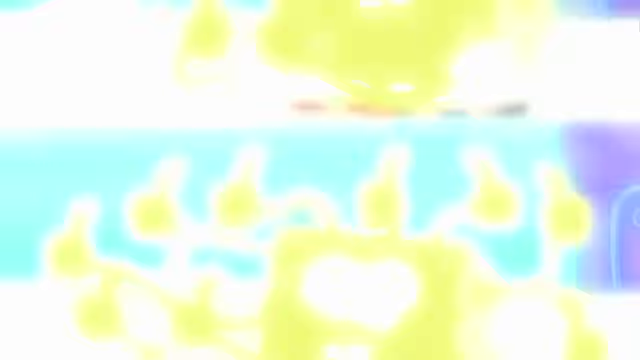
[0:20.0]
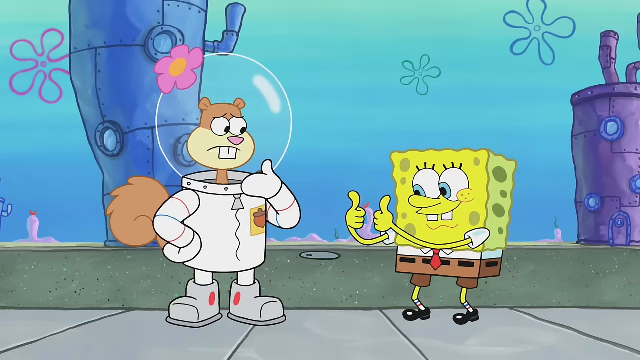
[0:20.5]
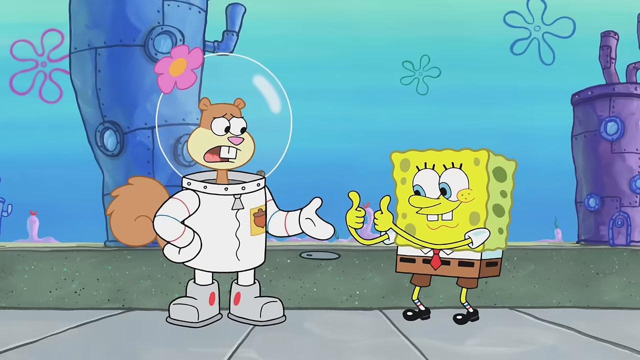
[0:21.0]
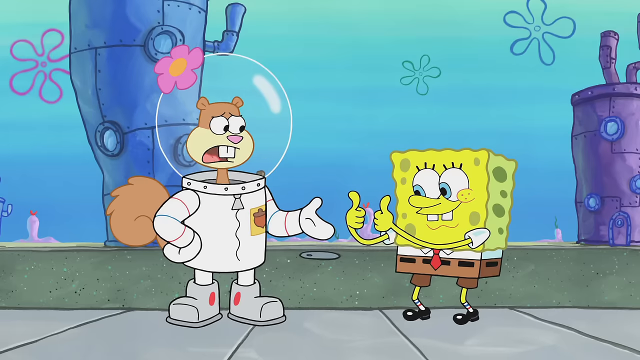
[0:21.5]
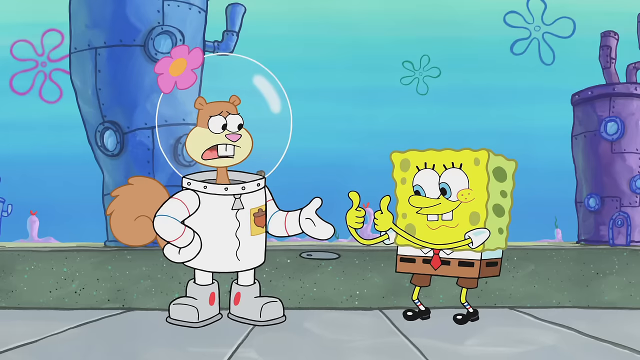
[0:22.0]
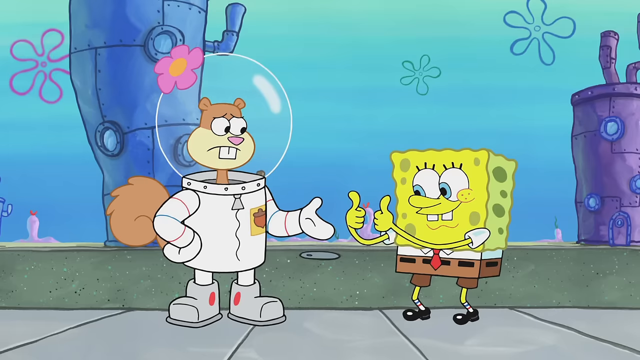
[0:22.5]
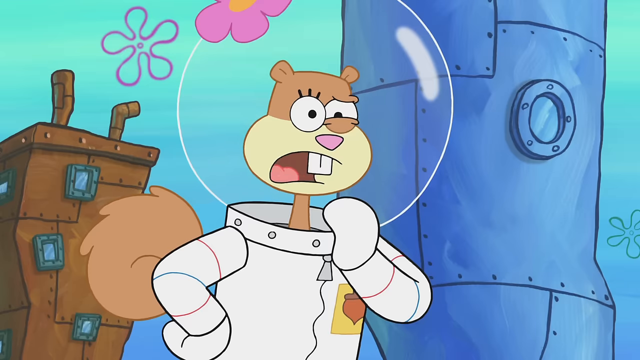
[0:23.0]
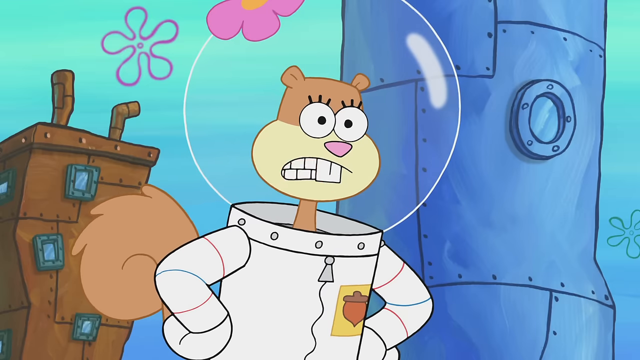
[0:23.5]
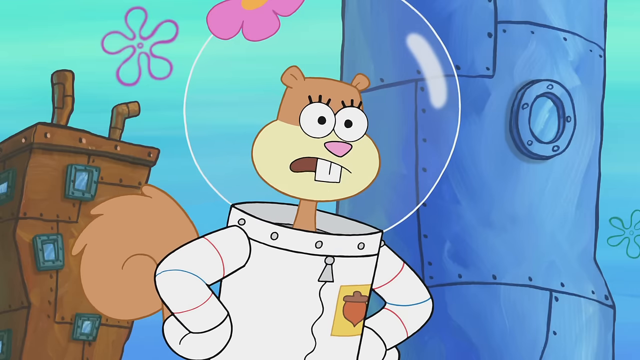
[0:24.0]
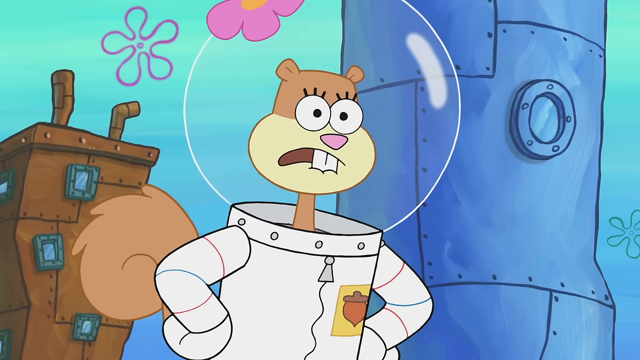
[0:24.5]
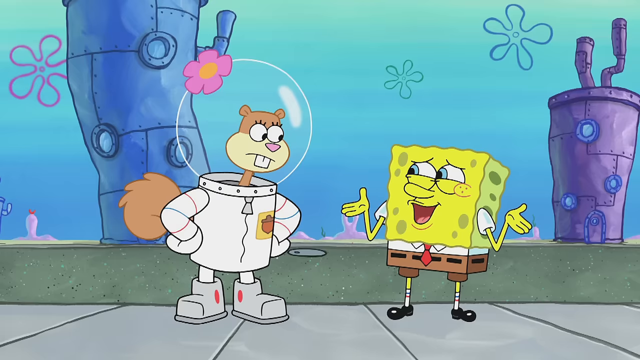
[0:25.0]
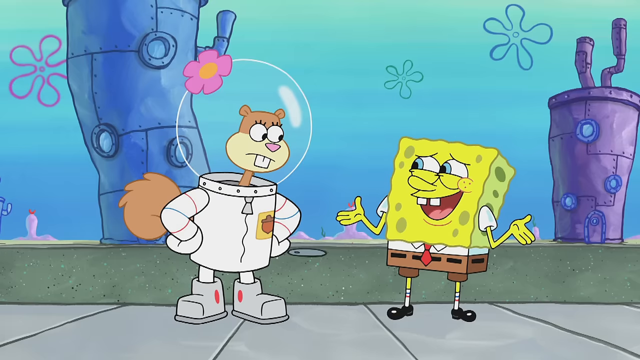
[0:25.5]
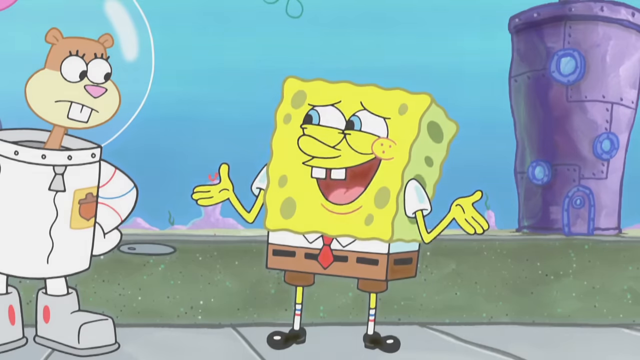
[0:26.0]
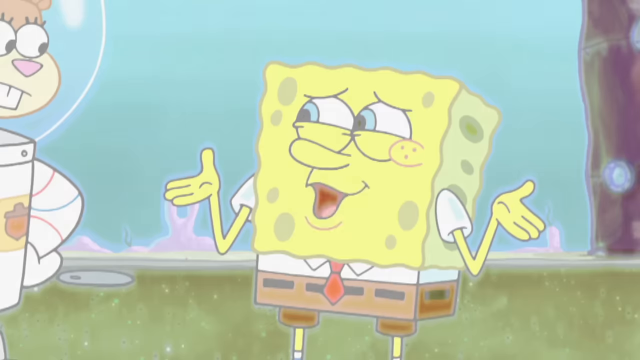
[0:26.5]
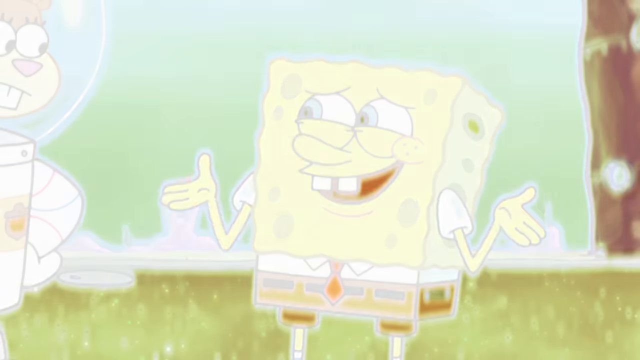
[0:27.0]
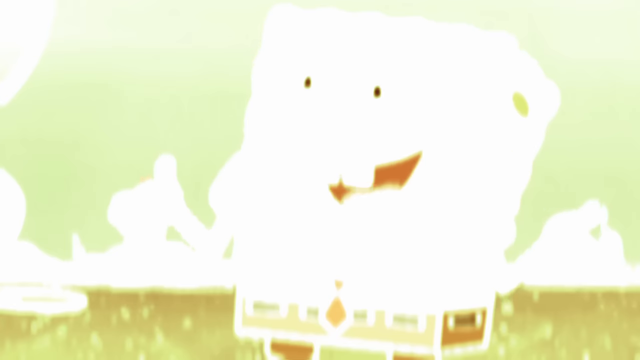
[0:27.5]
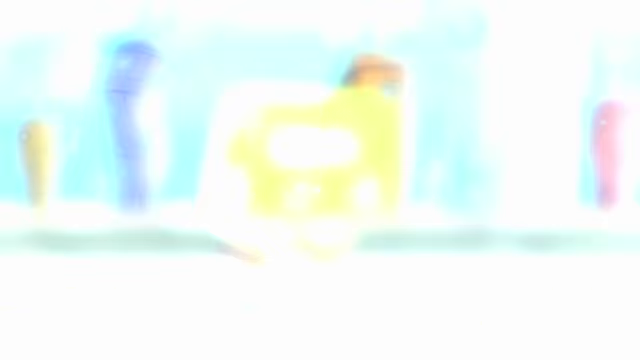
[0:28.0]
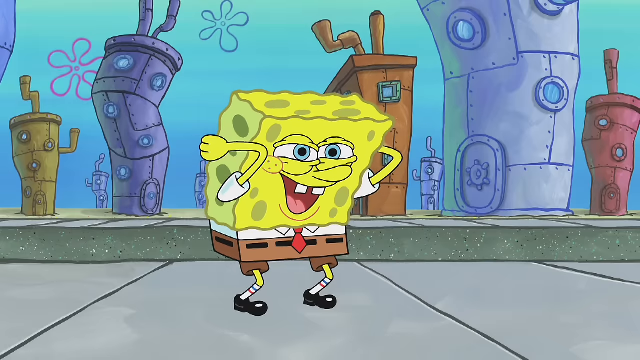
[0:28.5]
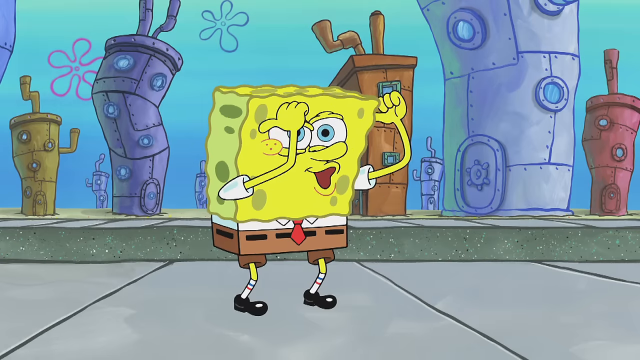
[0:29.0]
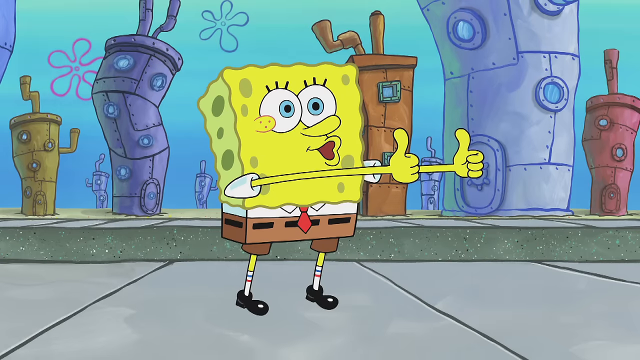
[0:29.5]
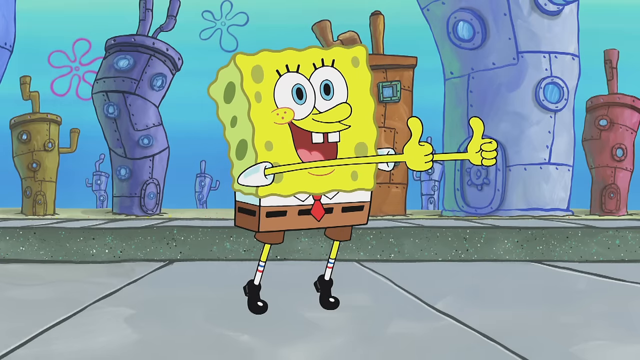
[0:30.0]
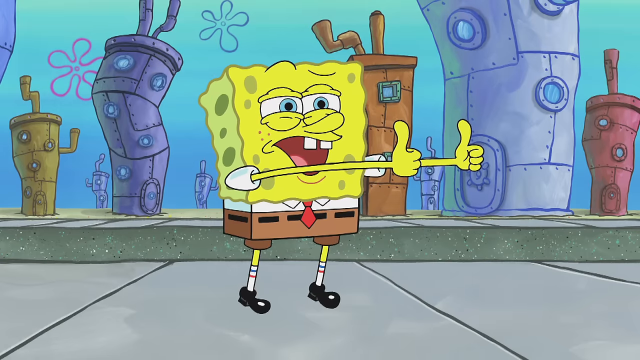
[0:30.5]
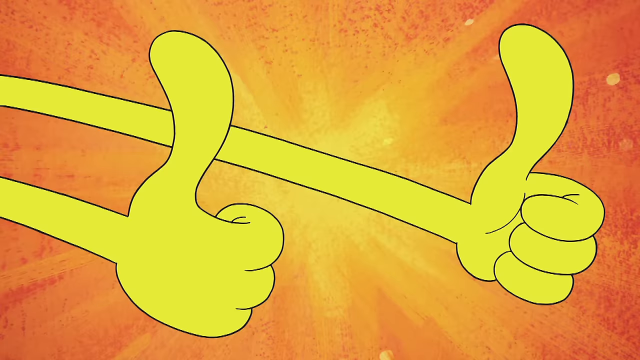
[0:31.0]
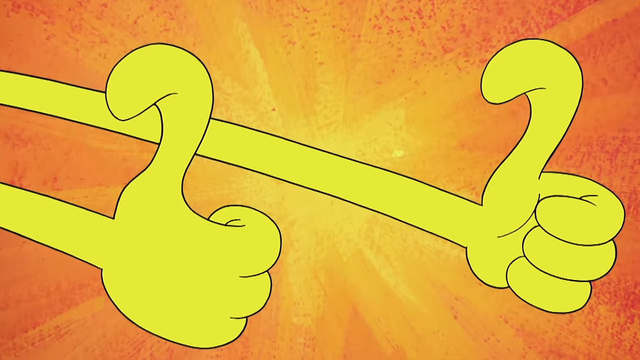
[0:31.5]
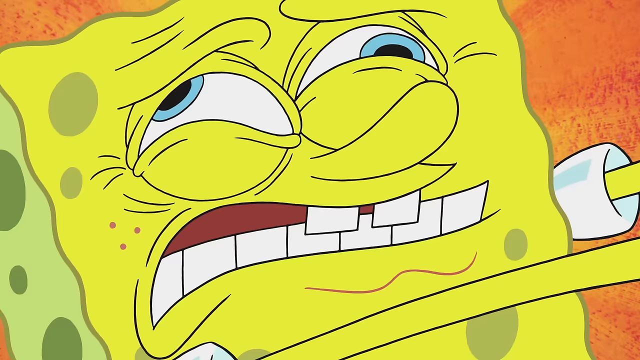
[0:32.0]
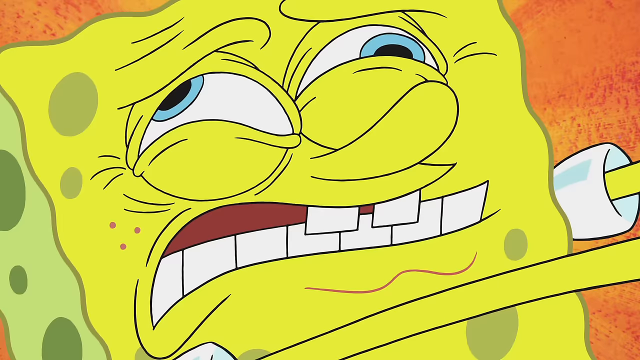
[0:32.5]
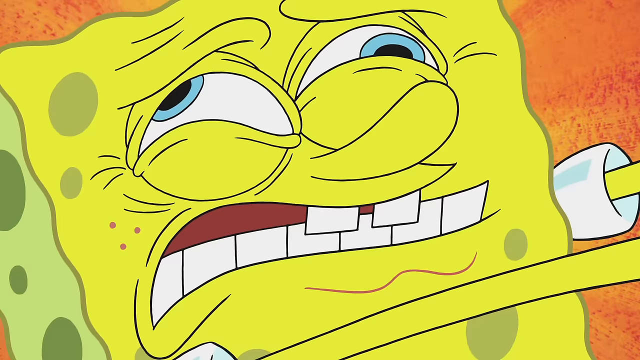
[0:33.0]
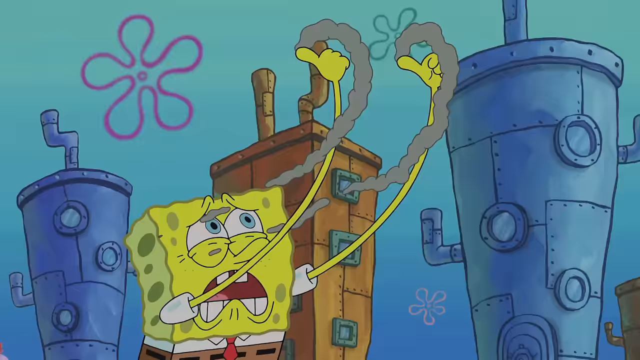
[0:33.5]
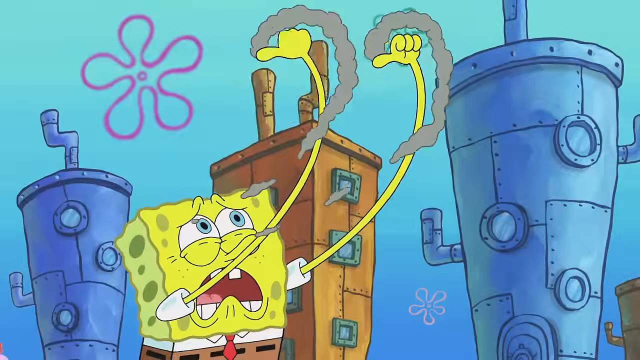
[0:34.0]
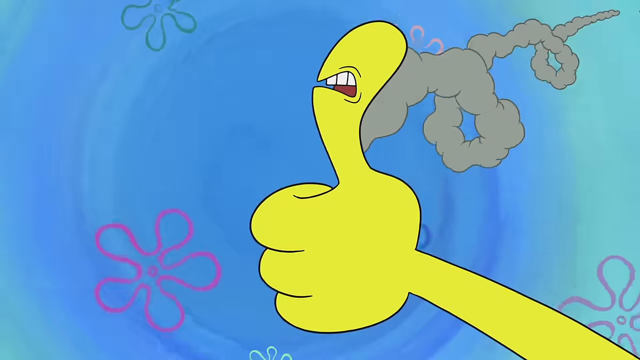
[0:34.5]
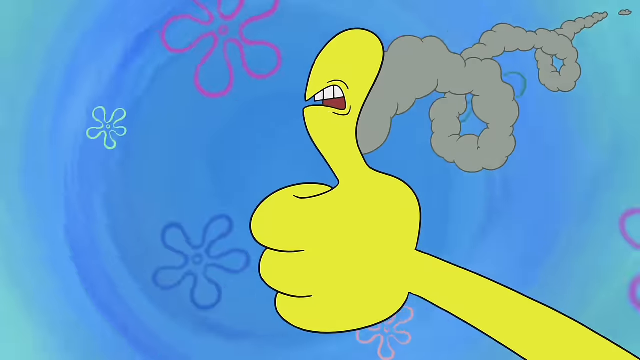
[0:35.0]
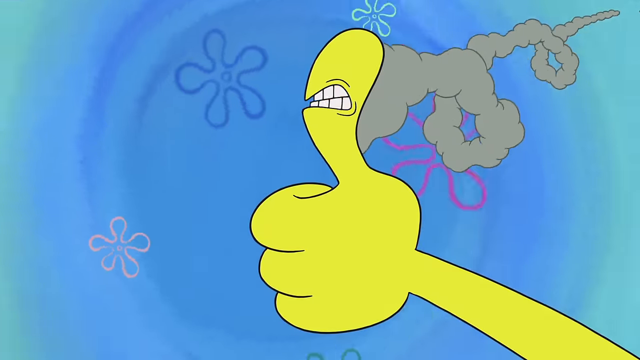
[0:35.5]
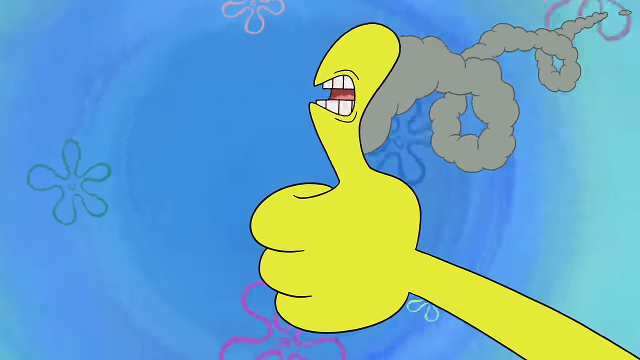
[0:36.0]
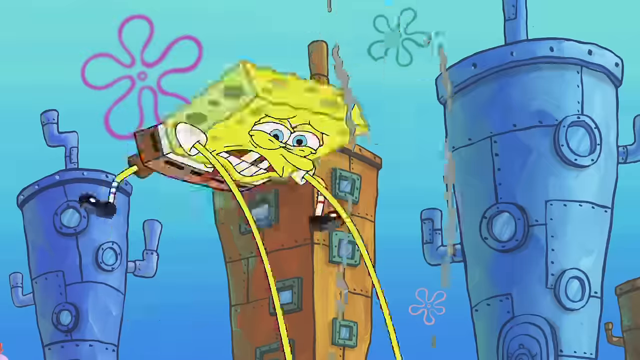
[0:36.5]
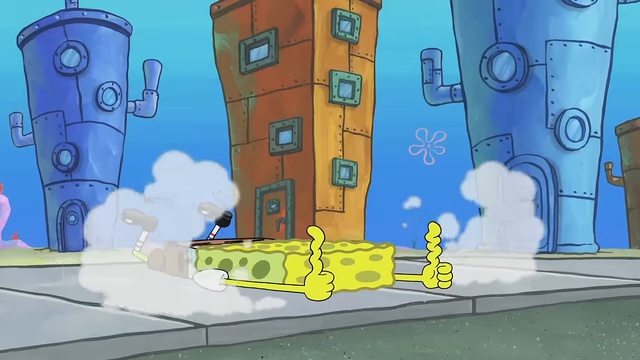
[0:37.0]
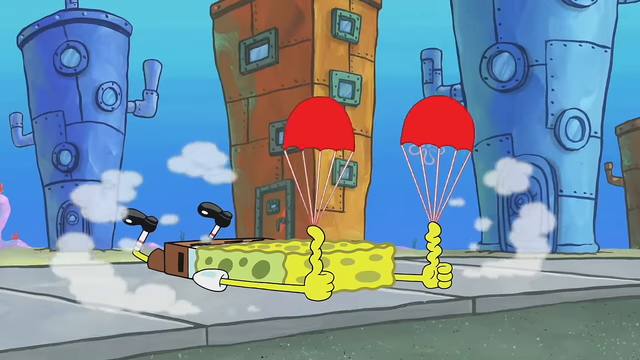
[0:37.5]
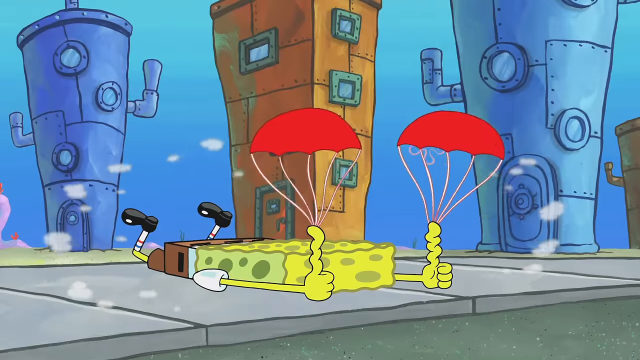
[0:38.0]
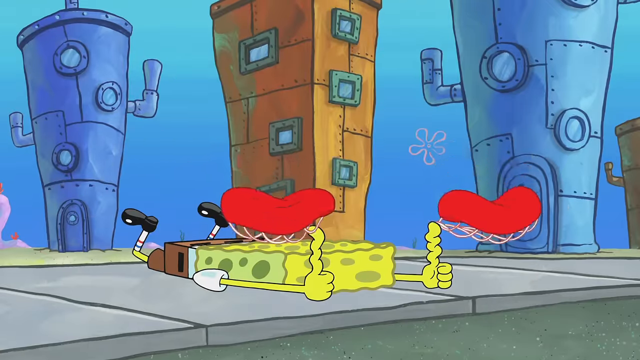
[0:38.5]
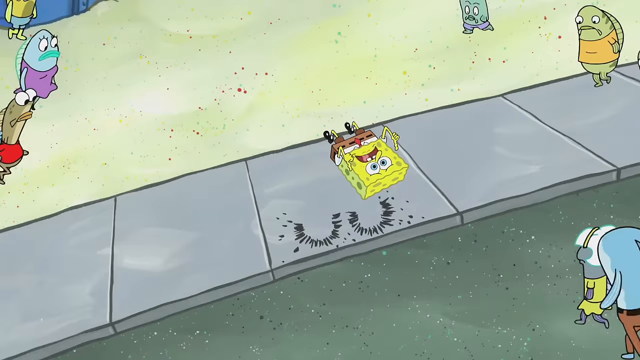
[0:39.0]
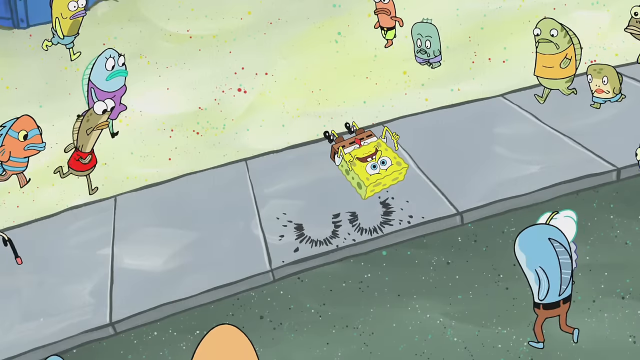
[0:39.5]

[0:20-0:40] SpongeBob stands in the street on the ocean floor, talking with Sandy the squirrel, who wears her usual white jumpsuit with a fishbowl above her head. SpongeBob gives her two thumbs up as she talks. The view zooms into Sandy's face as she keeps talking, then zooms back out to show both of them as SpongeBob shrugs his shoulders and talks to Sandy. A transition follows with a bright light that gets brighter each time. Afterward, SpongeBob smiles, ecstatic, blinking his eyes and giving two thumbs up. The view zooms in on his thumbs, which are crooked and drooping, then focuses on his face as he clenches his teeth, struggling to keep his thumbs straight. Smoke appears above his thumbs, which are given teeth and begin to talk. Parachutes appear above his thumbs and they fall to the ground, and SpongeBob then falls to the ground on his face.